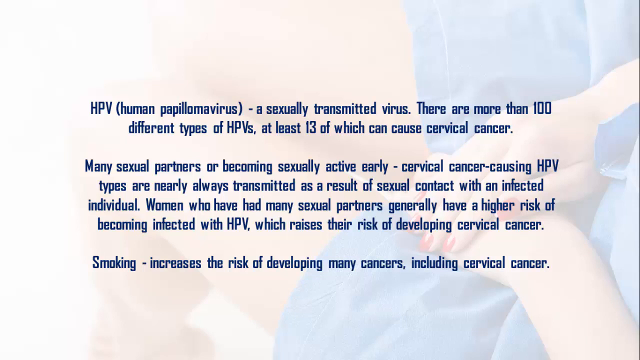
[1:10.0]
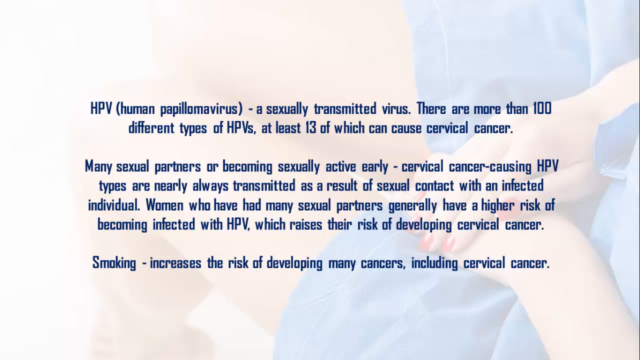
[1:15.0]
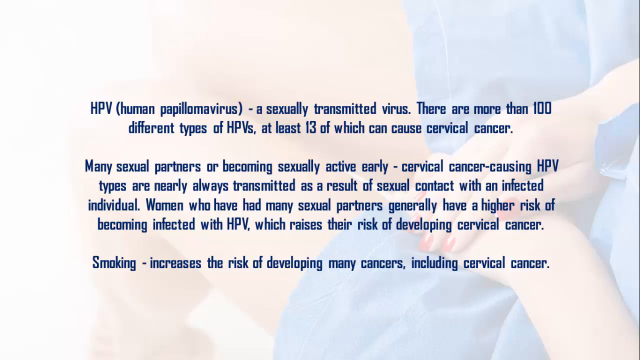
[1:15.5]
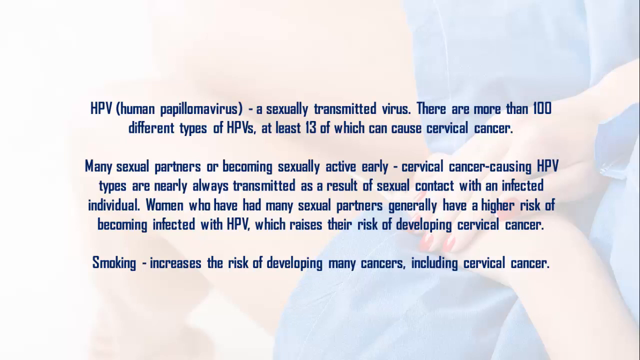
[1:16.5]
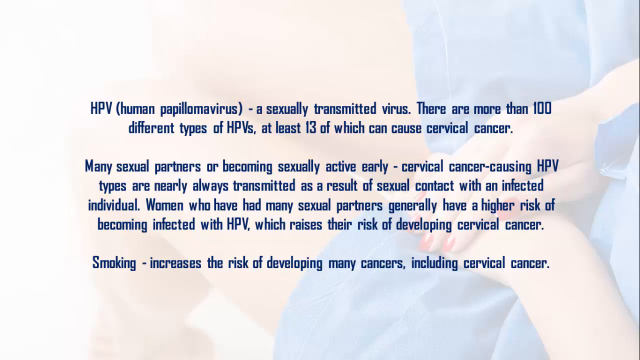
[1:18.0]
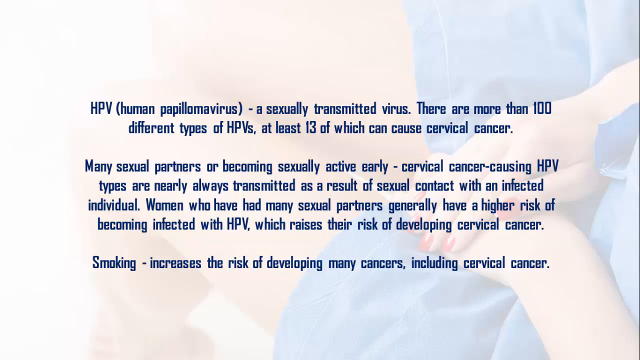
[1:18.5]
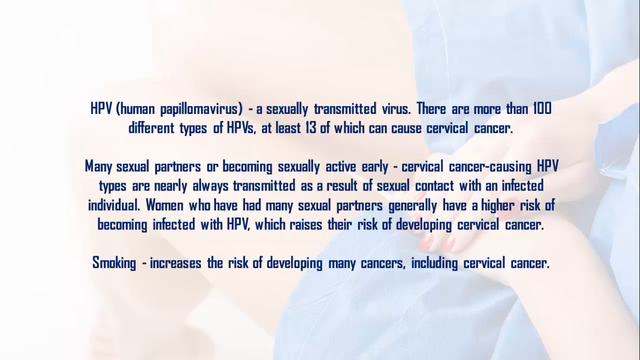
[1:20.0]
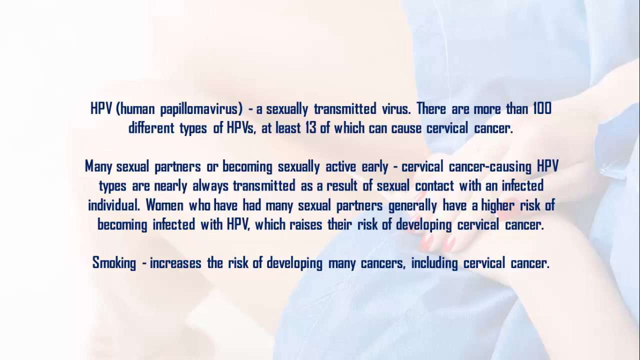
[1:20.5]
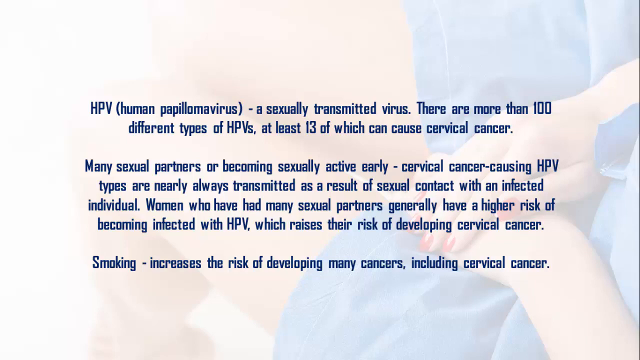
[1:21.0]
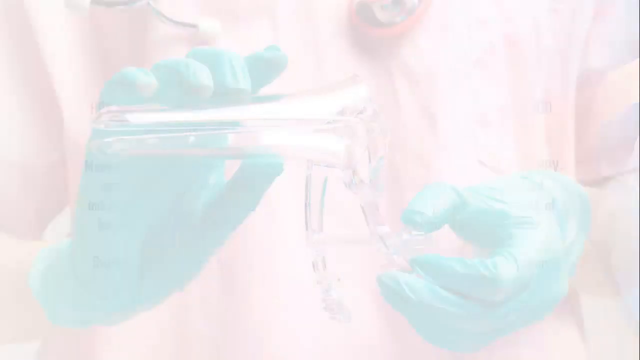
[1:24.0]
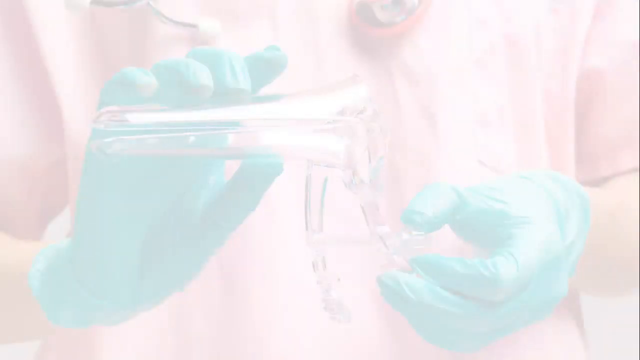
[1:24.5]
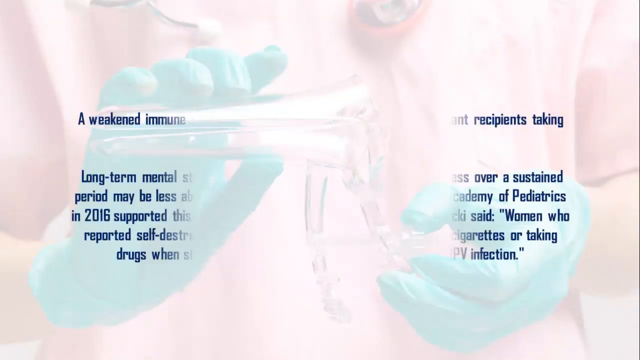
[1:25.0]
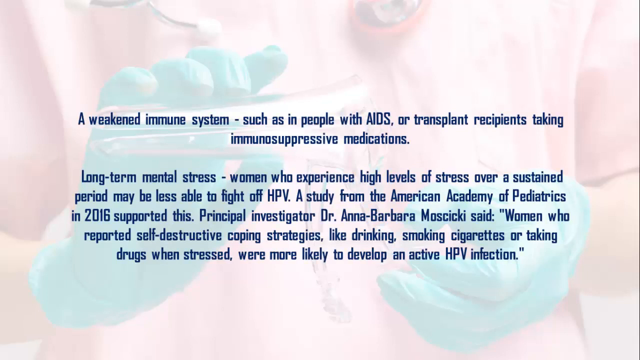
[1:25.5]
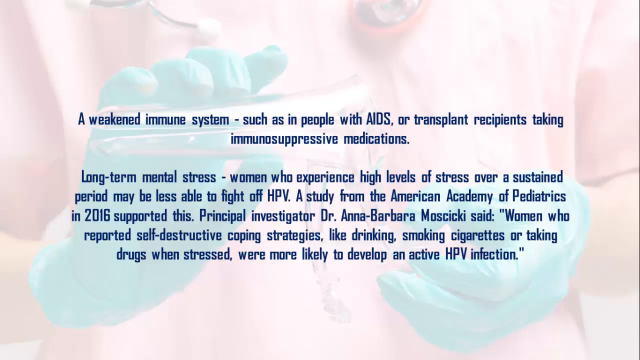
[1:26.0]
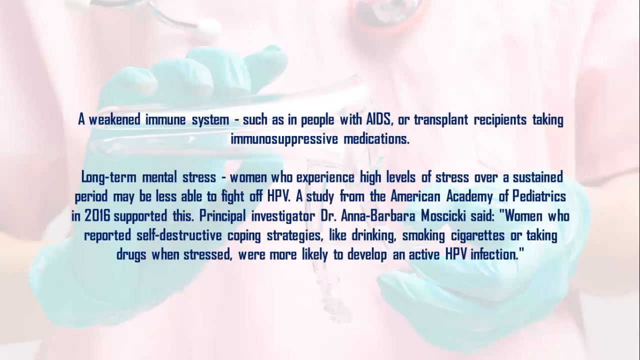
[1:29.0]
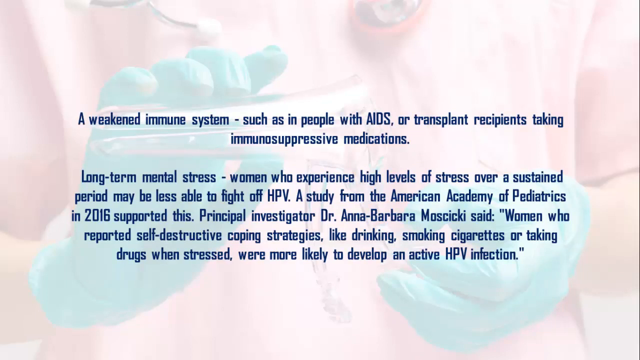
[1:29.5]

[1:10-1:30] Dark blue text in the center of the screen, in three centered paragraphs, reads: "HPV, human papillomavirus, a sexually transmitted virus. There are more than 100 different types of HPVs, at least 13 of which can cause cervical cancer. Many sexual partners are becoming sexually active early. Cervical cancer causing HPV types are nearly always transmitted as a result of sexual contact with an infected individual. Women who have had many sexual partners generally have a higher risk of becoming infected with HPV, which raises their risk of developing cervical cancer. Smoking increases the risk of developing many cancers, including cervical cancer." The background then switches to what looks like a doctor wearing gloves, pouring something into a tube. Over it, dark blue text reads: "A weakened immune system, such as in people with AIDS or transplant recipients taking immunosuppressive medications. Long-term mental stress. Women who experience high levels of stress over a sustained period may be less able to fight off HPV. A study from the American Academy of Pediatrics in 2016 supported this. Principal investigator Dr. Anna Barbara Masaki said women who reported self-destructive coping strategies like drinking, smoking cigarettes, or taking drugs when stressed were more likely to develop an active HPV infection."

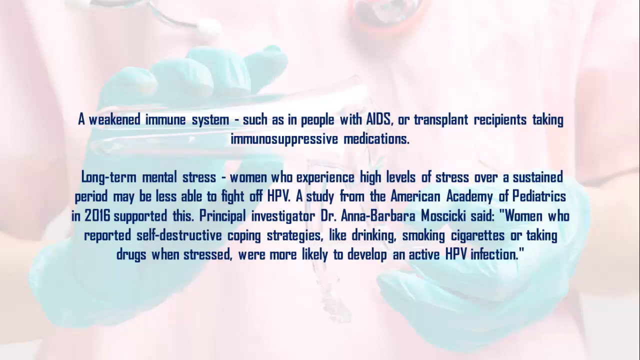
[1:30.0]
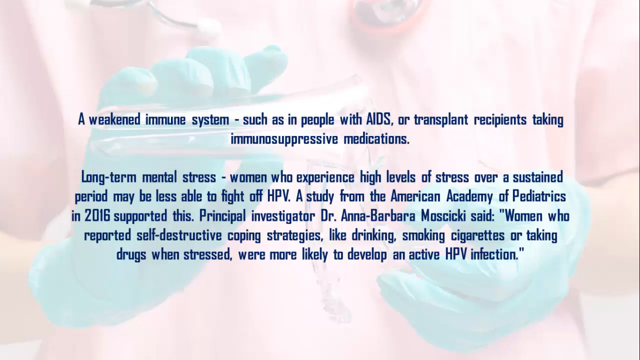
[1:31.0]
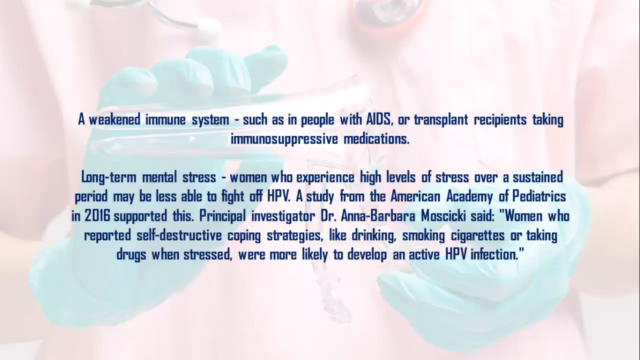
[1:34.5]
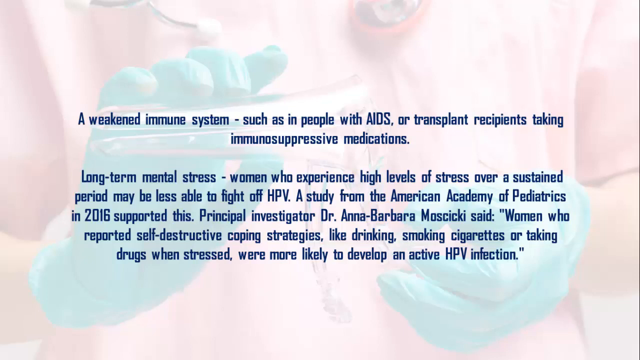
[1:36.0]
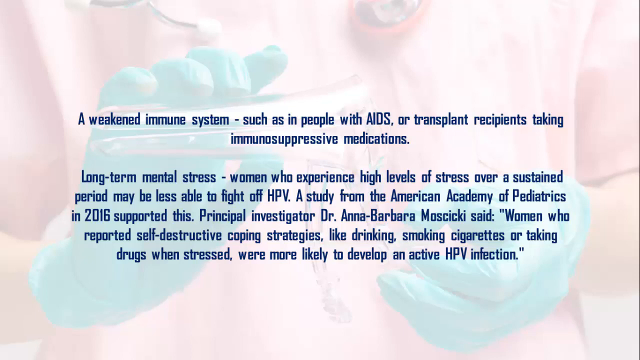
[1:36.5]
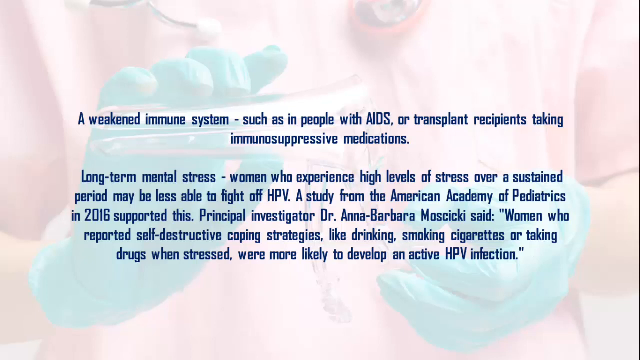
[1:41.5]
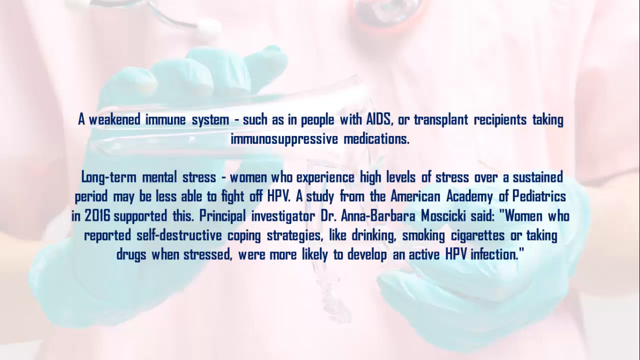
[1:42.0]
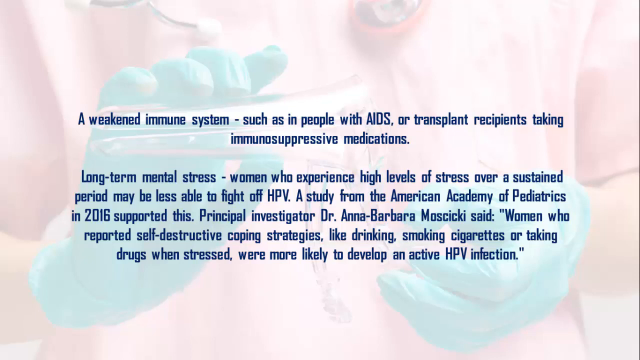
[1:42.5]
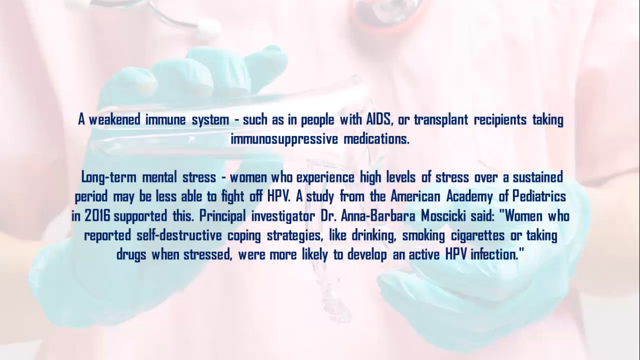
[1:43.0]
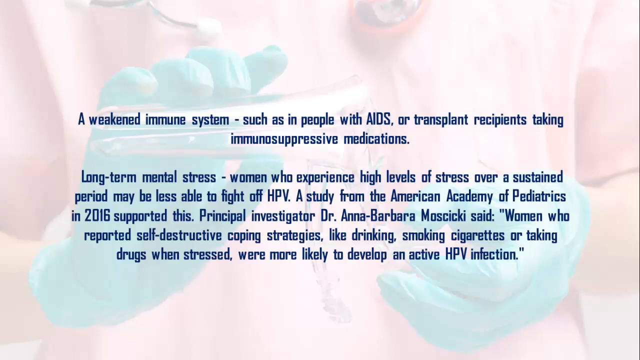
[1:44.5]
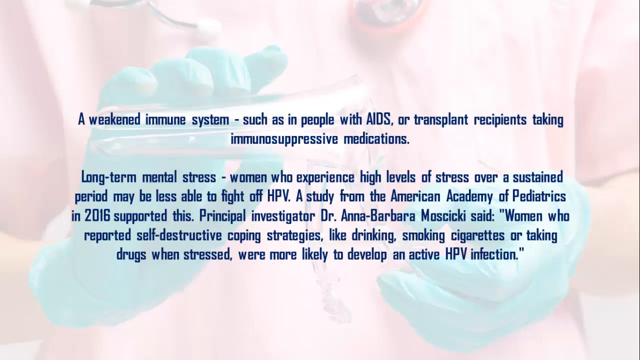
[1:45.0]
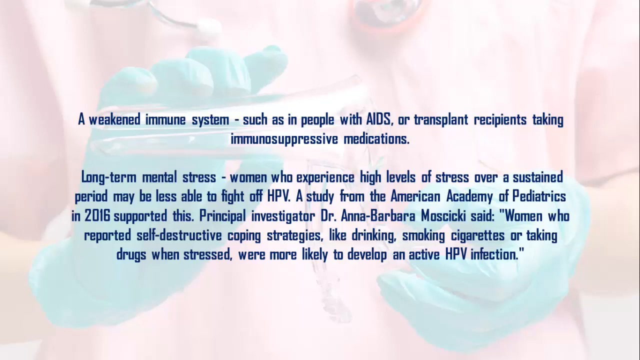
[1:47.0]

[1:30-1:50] The background image still shows what seems to be a doctor in maybe a pink shirt, with a stethoscope around their neck, wearing green gloves and pouring something into a stethoscope or into a tube. Dark blue text in two paragraphs in the very center of the screen says: "A weakened immune system such as in people with AIDS or transplant recipients taking immunosuppressive medications. Long-term mental stress, women who experience high levels of stress over a sustained period may be less able to fight off HPV. A study from the American Academy of Pediatrics in 2016 supported this. Principal investigator Dr. Anna Barbara Muskaki said women who reported self-destructive coping strategies like drinking, smoking cigarettes, or taking drugs when stressed were more likely to develop an active HPV infection."